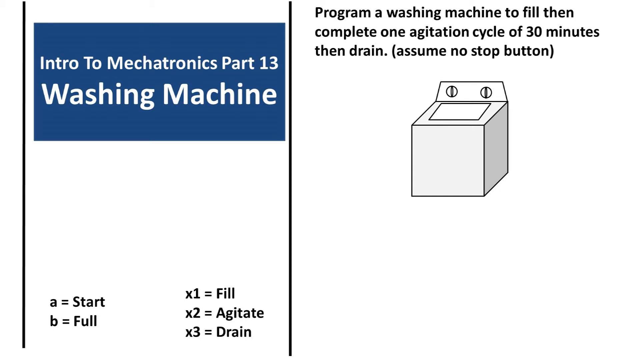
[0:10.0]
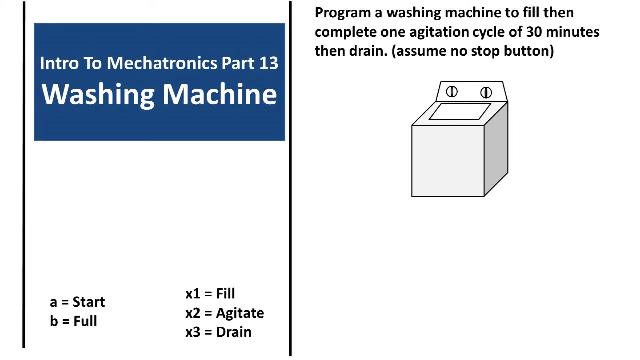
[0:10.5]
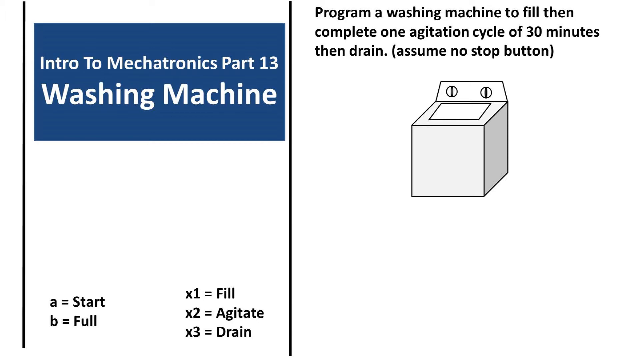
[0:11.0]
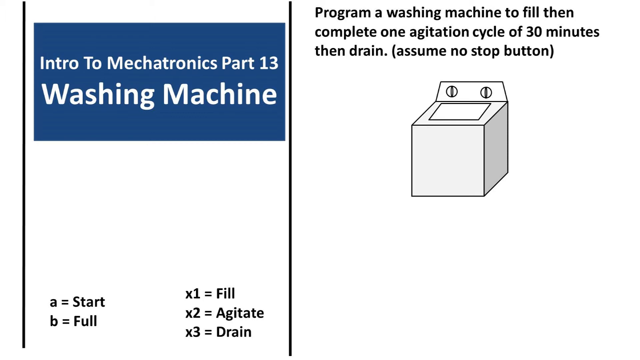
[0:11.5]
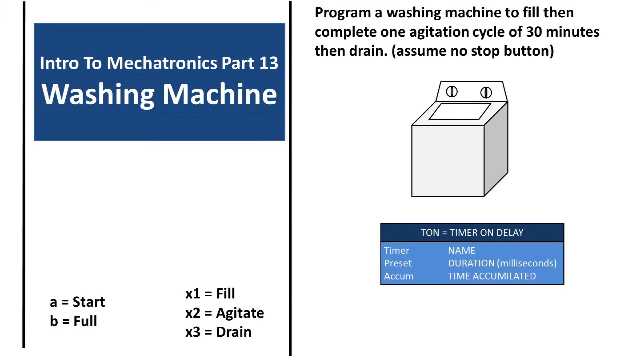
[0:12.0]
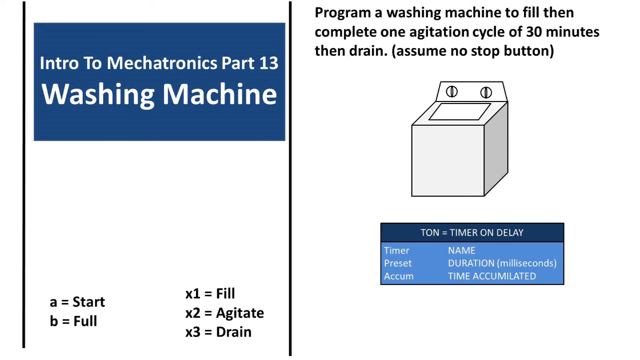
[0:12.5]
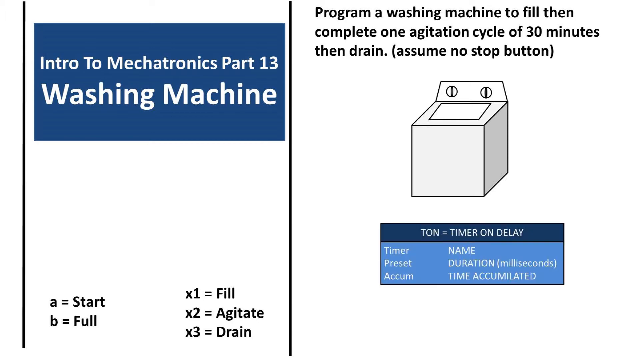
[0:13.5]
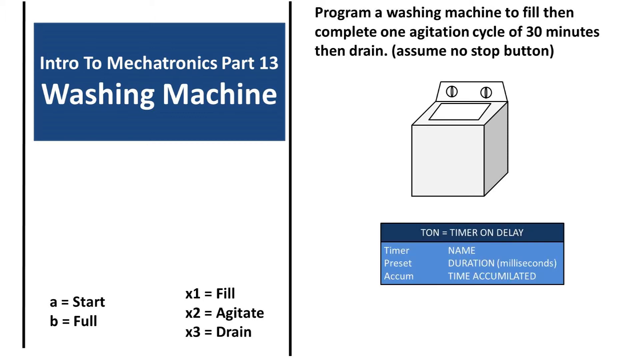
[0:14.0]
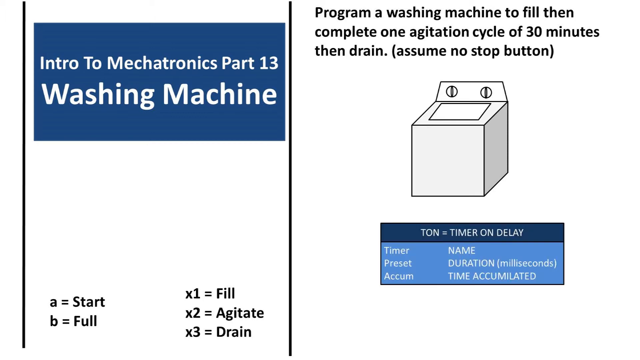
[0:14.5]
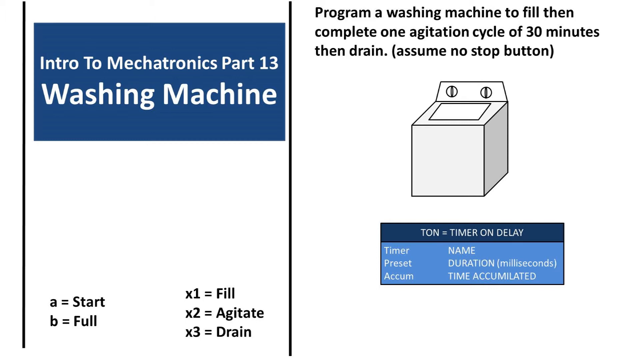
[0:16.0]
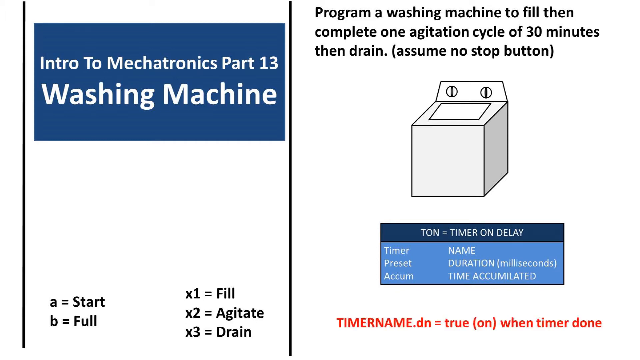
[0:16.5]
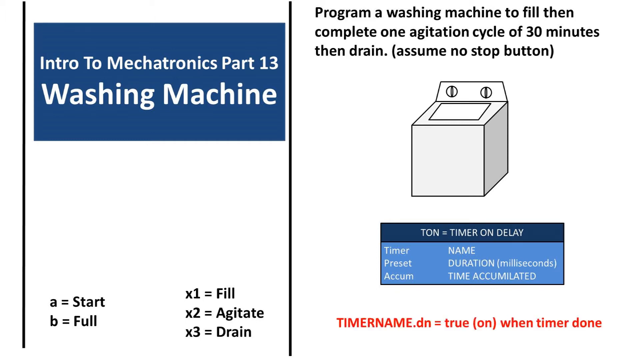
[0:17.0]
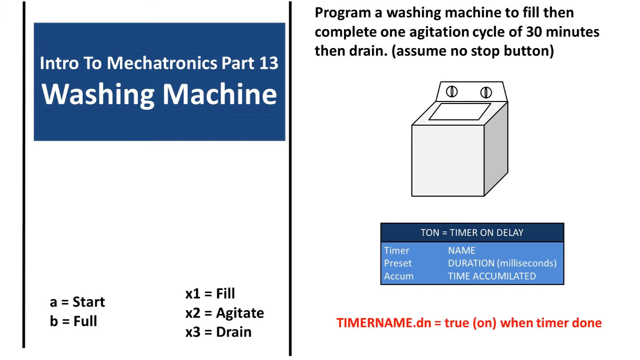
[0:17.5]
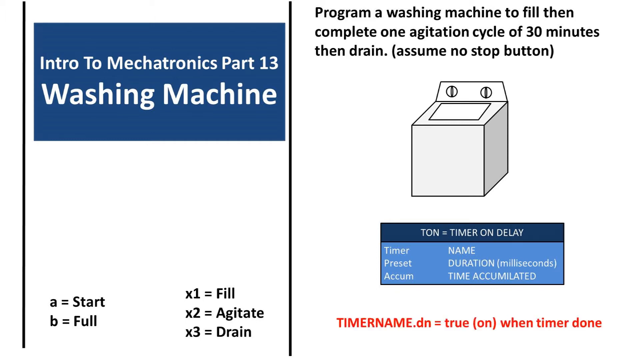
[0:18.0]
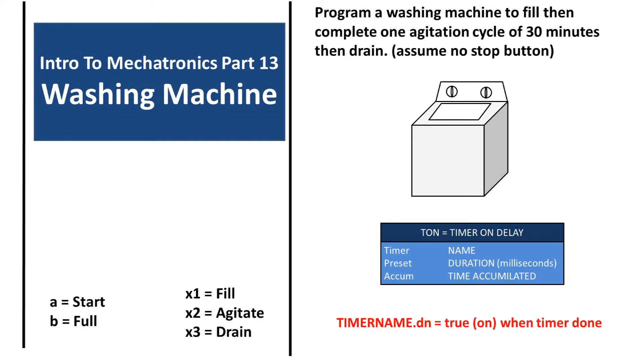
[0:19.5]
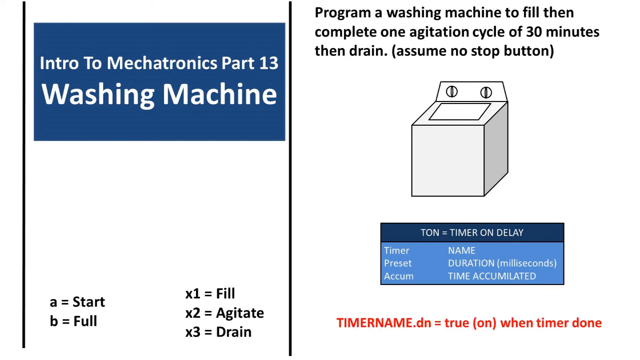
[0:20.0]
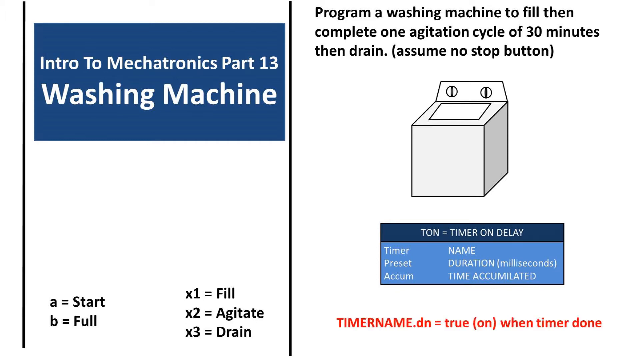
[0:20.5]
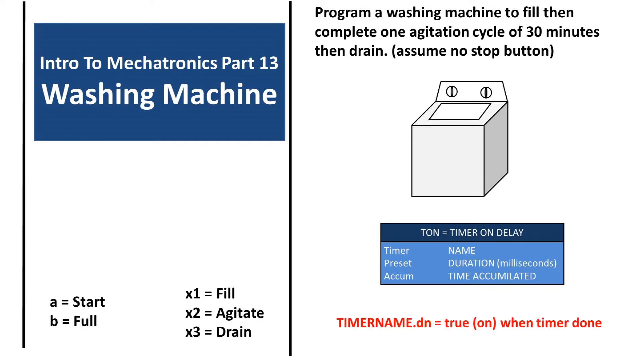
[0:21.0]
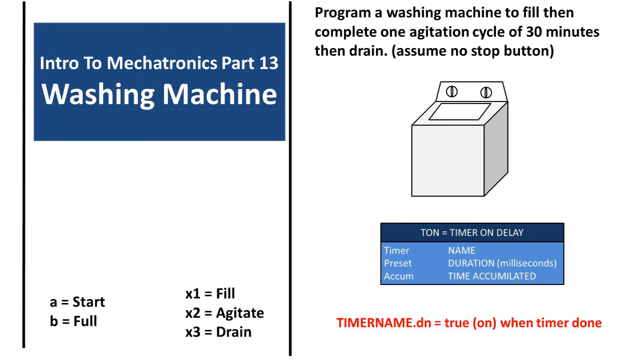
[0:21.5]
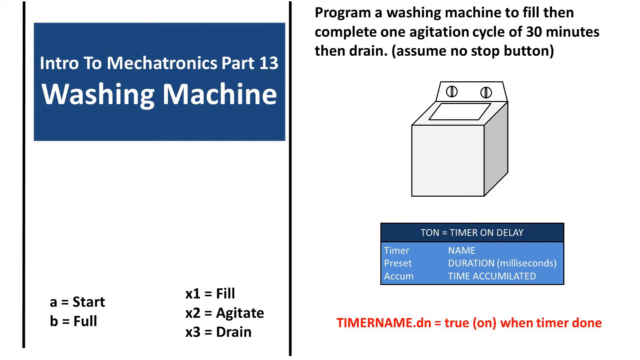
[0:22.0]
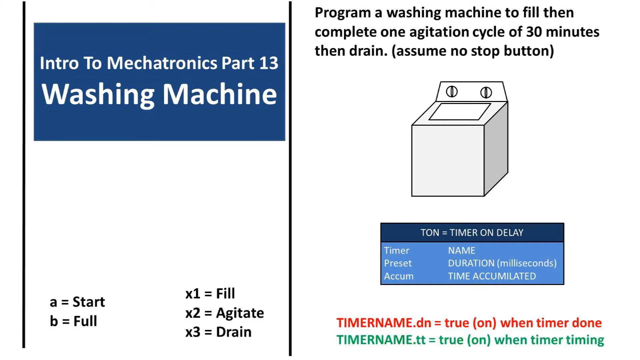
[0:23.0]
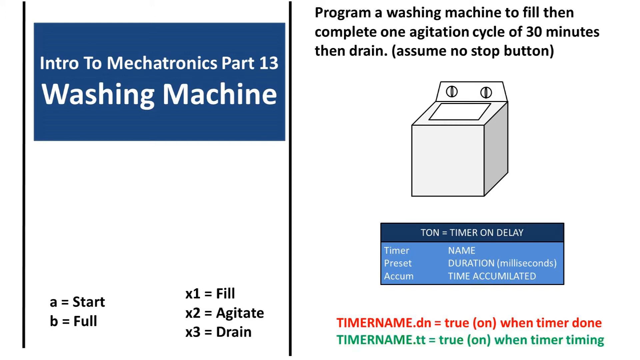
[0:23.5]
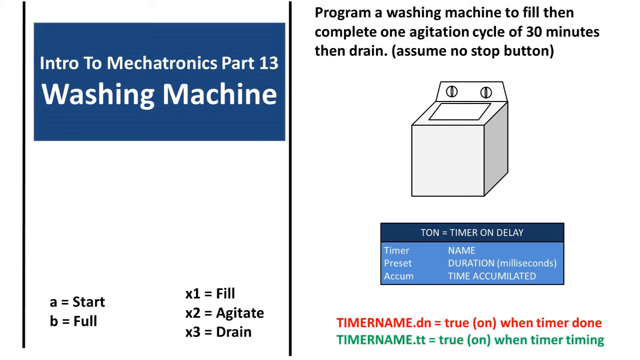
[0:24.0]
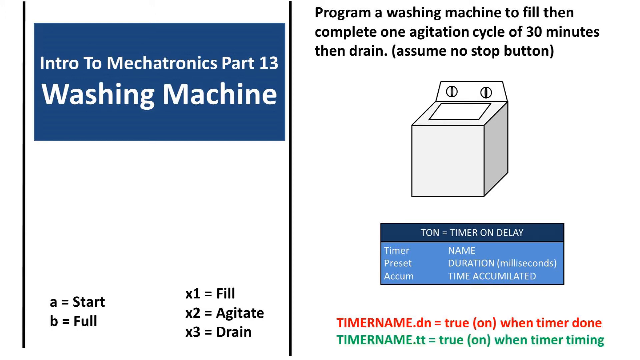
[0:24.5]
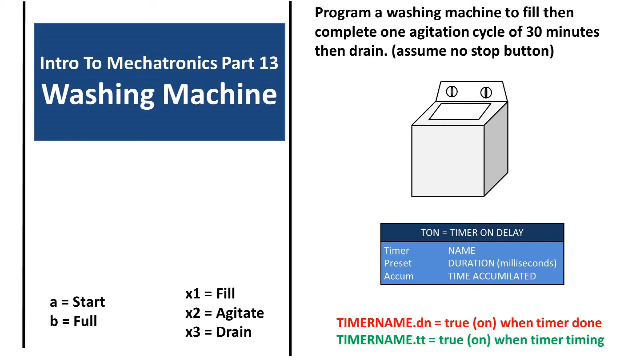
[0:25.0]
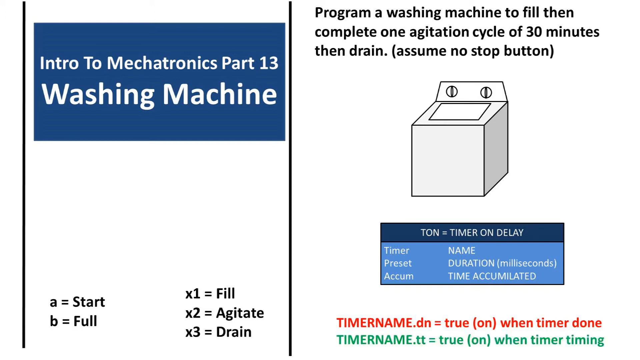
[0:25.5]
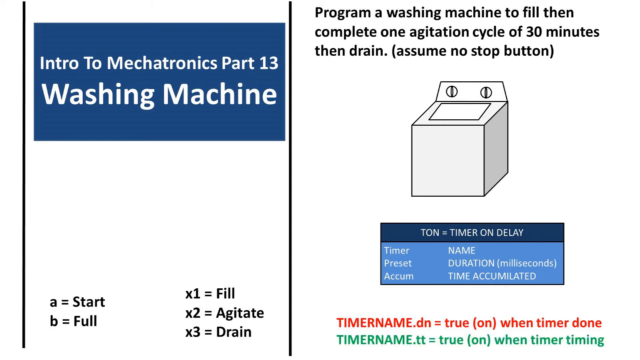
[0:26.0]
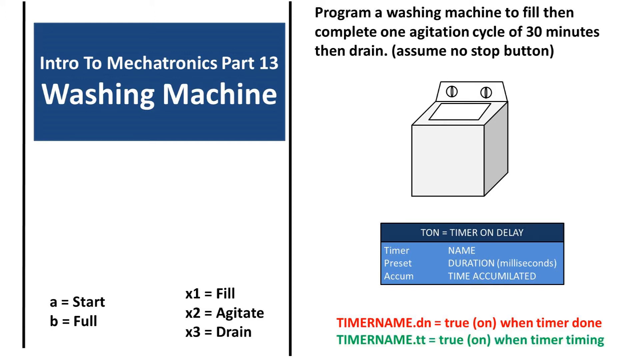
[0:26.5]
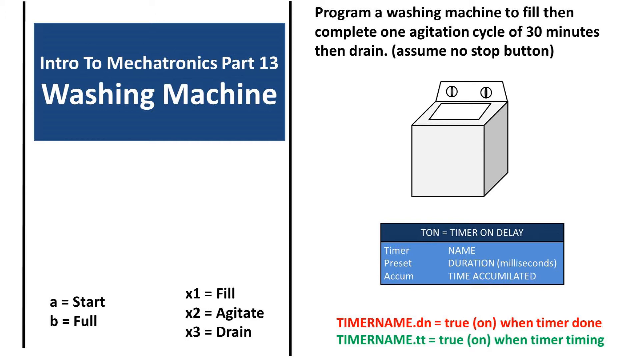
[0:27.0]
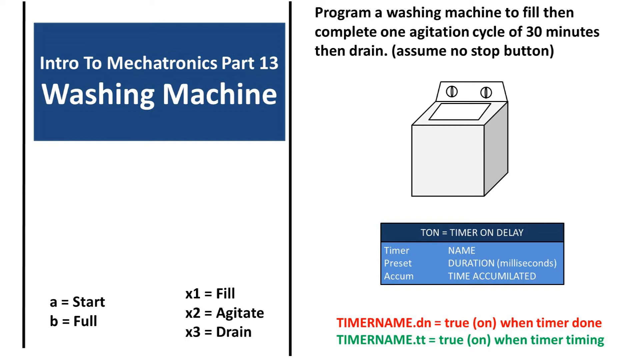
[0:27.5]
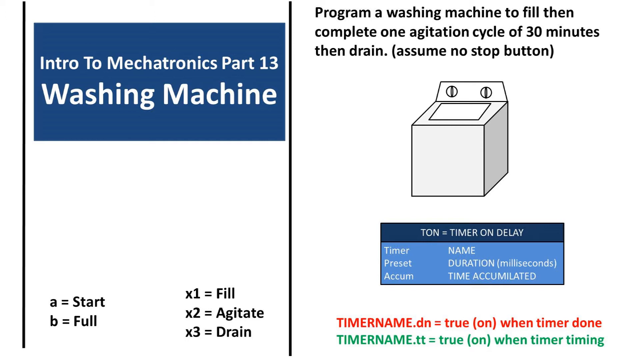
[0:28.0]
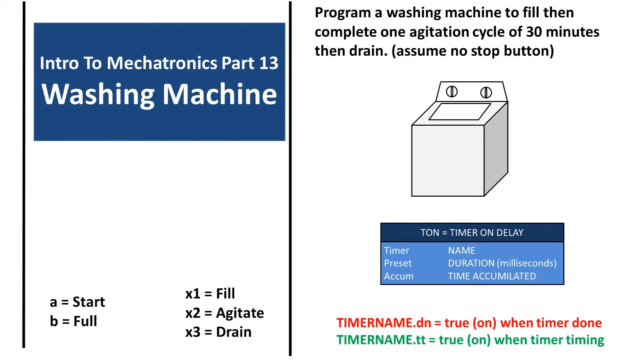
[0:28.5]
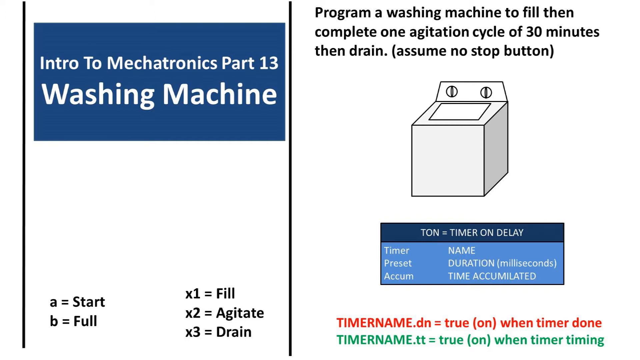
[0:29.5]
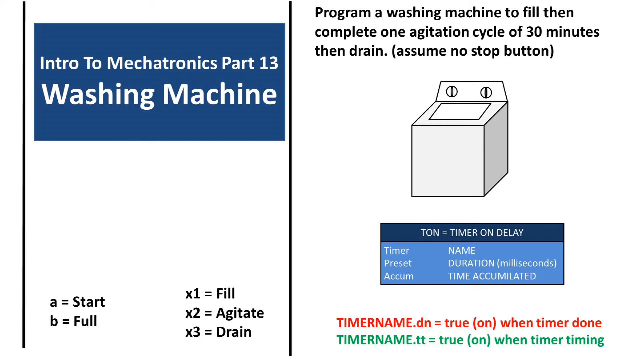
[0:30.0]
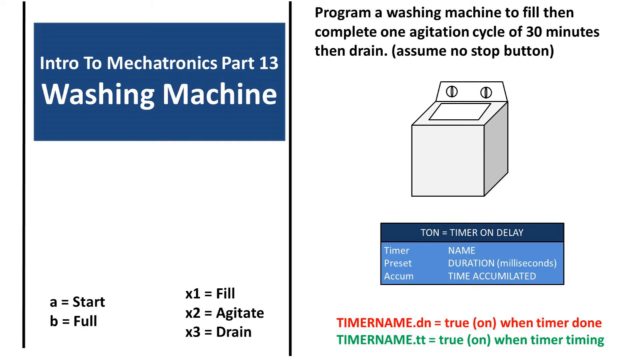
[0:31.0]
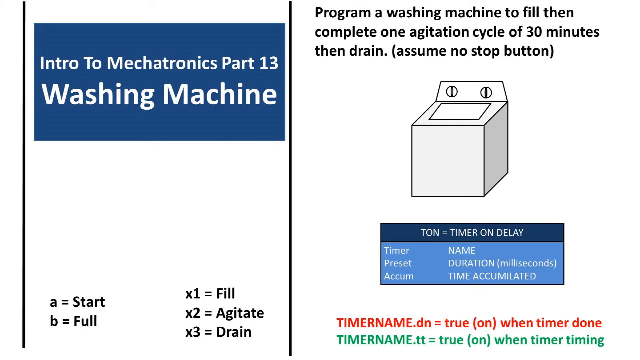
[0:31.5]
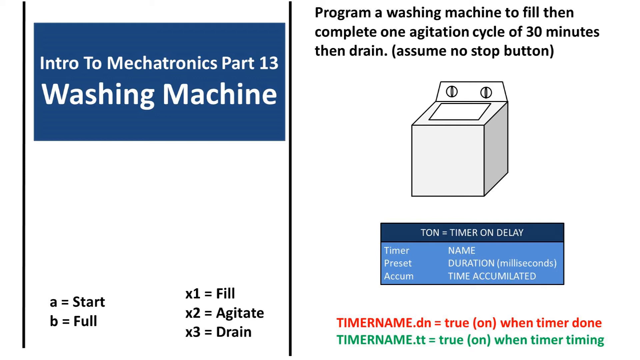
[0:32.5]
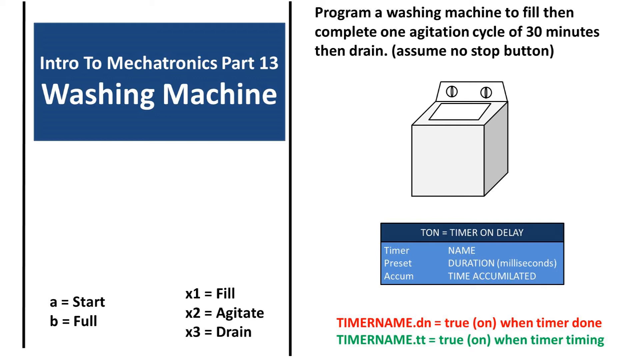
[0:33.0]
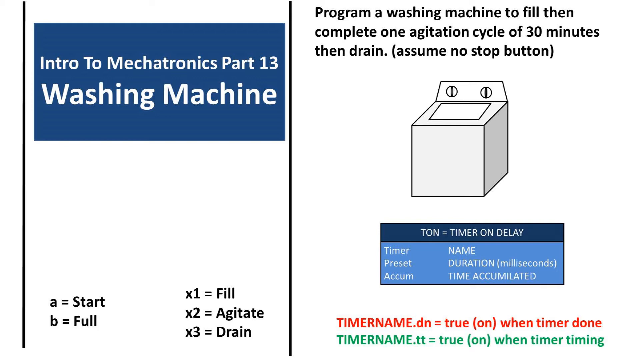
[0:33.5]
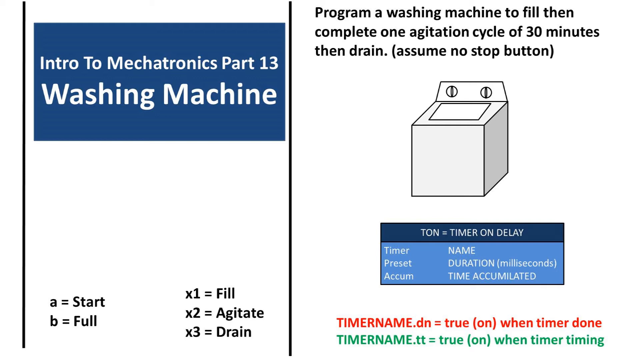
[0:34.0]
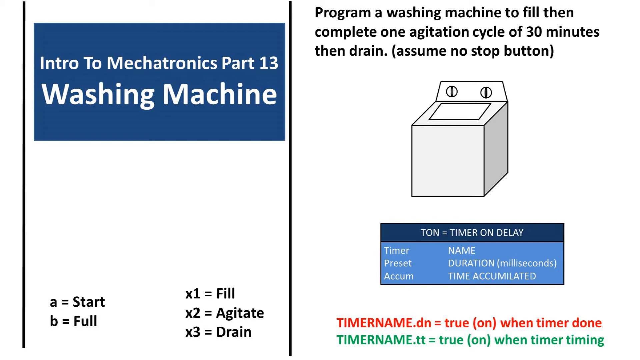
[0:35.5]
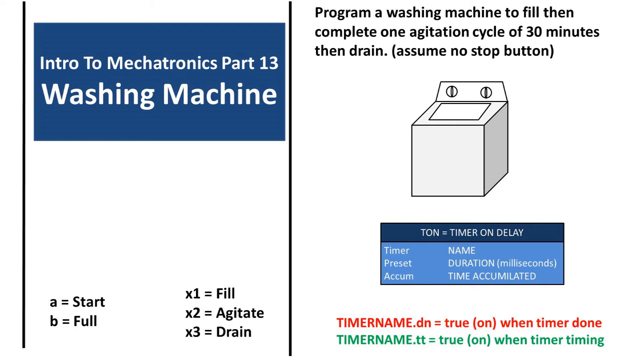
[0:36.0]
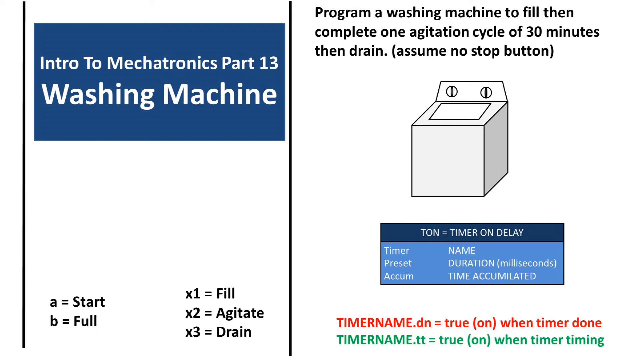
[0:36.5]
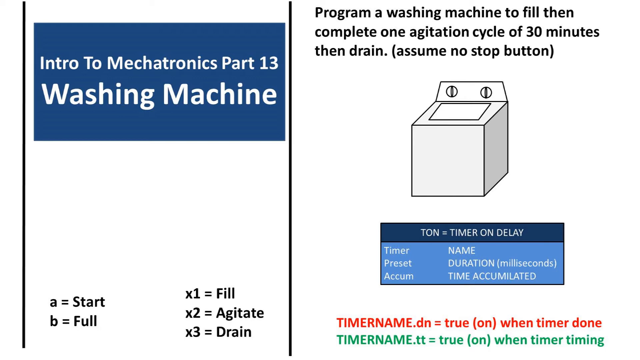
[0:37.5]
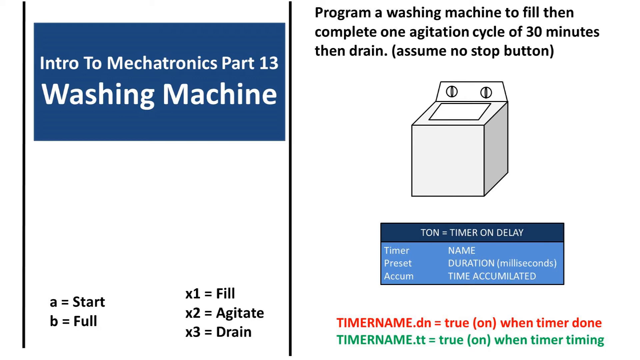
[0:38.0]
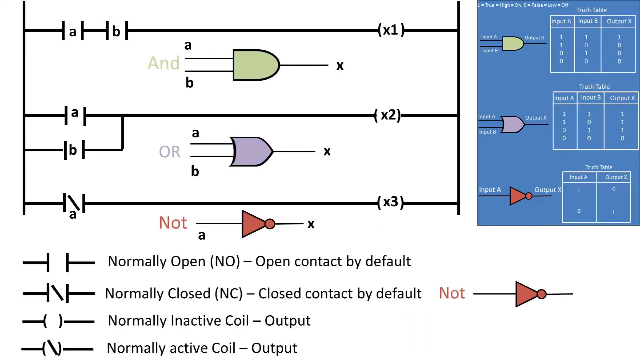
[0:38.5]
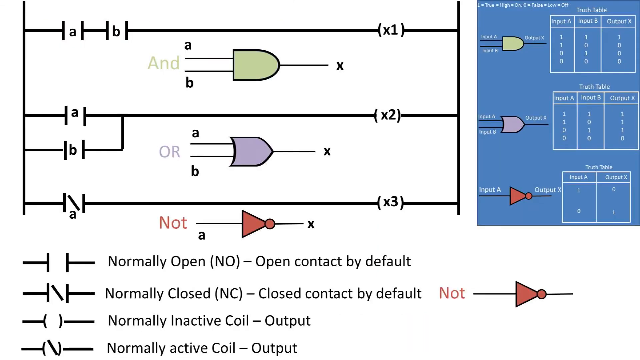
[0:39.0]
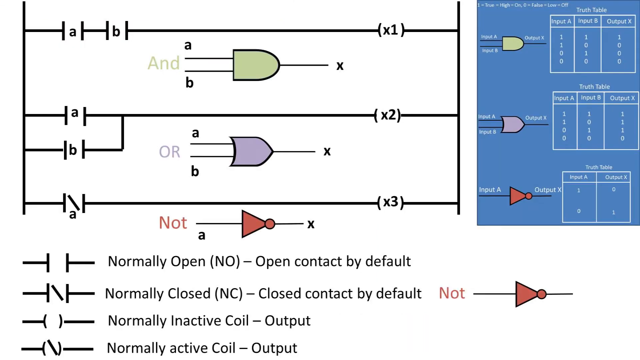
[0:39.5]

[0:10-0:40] The washing machine illustration is still visible, and a small table now appears at the bottom of the right column, below the text. It says "TON = Timer on Delay", with lines below reading "Table name," "Preset Duration (milliseconds)," and "Accum Time Accumulated." The table's background is blue: the title is a darker blue and the area with the information is a lighter blue. Below it, text says "timername.dn = true (on) when the timer is done", and below that "timername.pt = true (on) when timer is timing". The video then moves to the next slide, a graphical view of an electric configuration with some transistors connected in it, and a blue rectangle in the upper right of the screen with some information about these transistors.